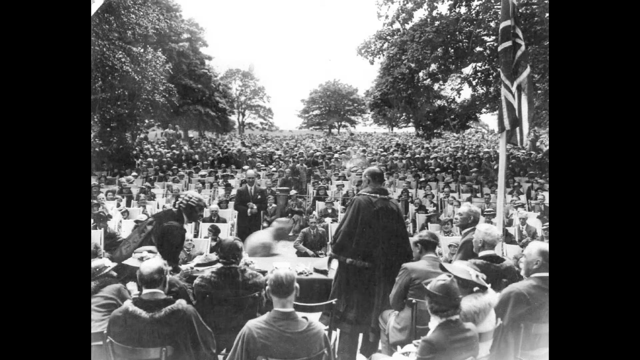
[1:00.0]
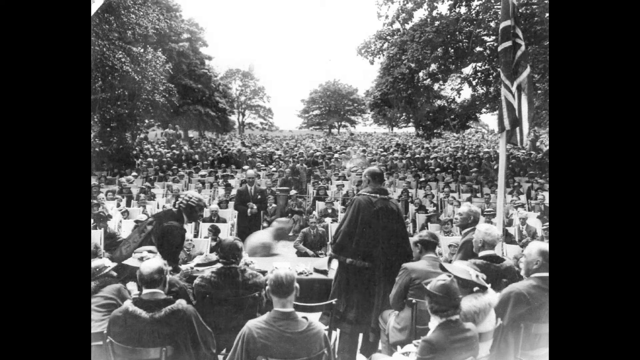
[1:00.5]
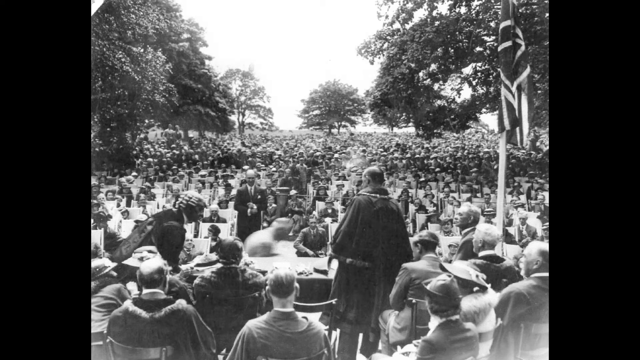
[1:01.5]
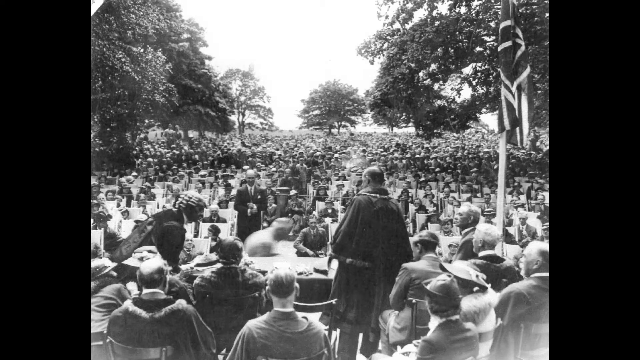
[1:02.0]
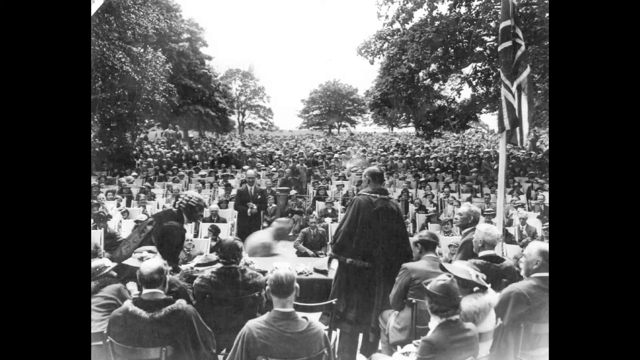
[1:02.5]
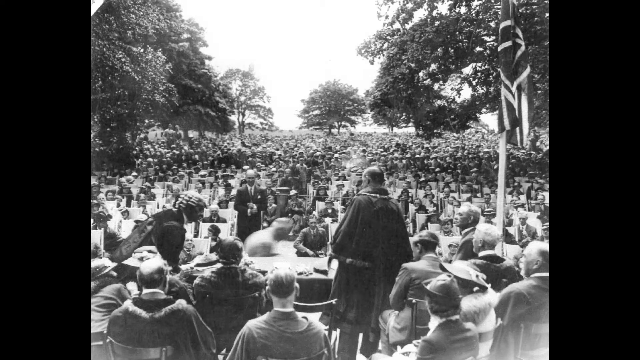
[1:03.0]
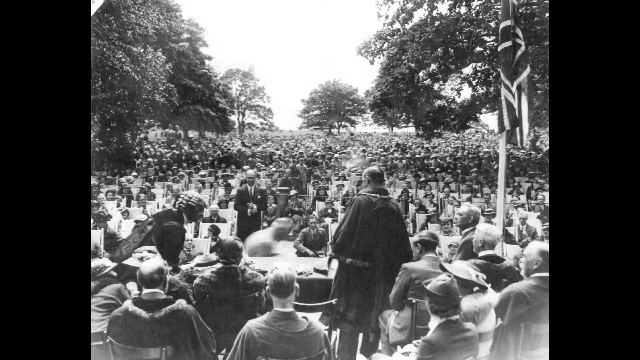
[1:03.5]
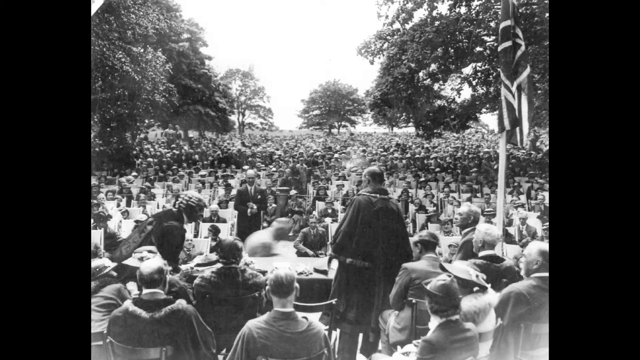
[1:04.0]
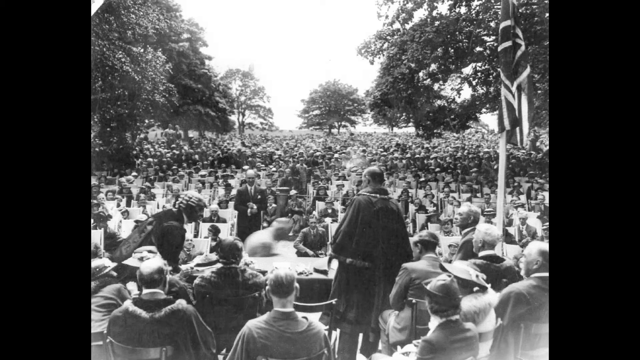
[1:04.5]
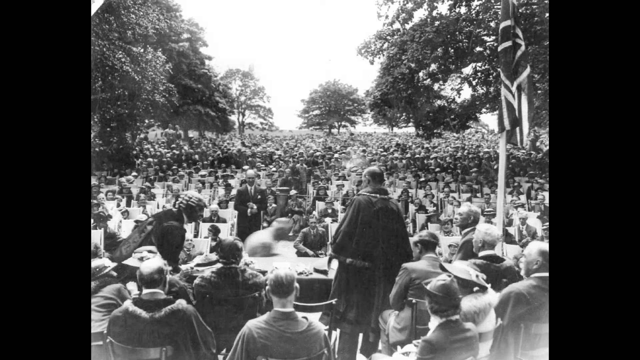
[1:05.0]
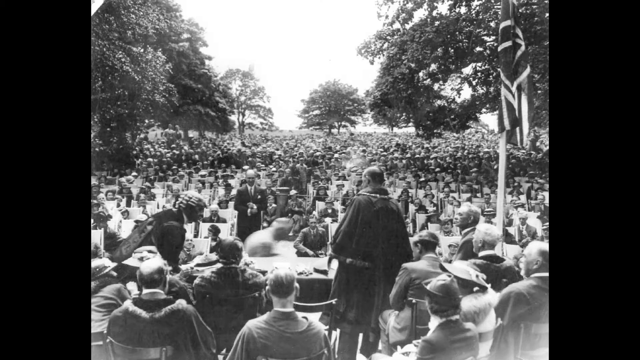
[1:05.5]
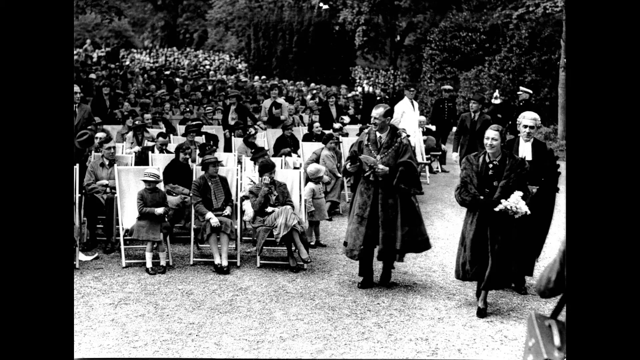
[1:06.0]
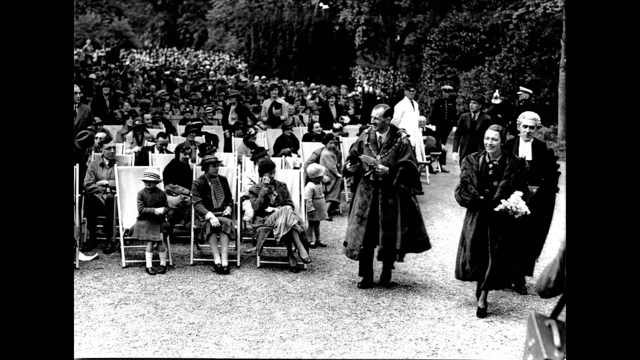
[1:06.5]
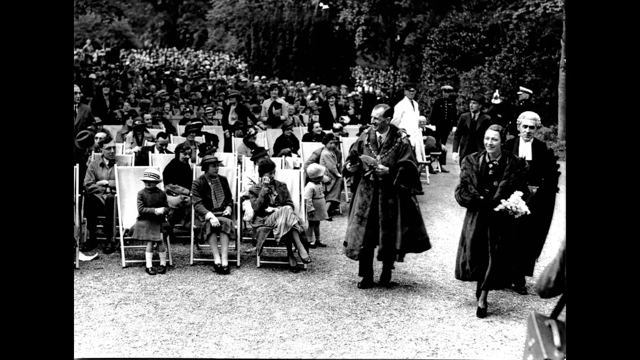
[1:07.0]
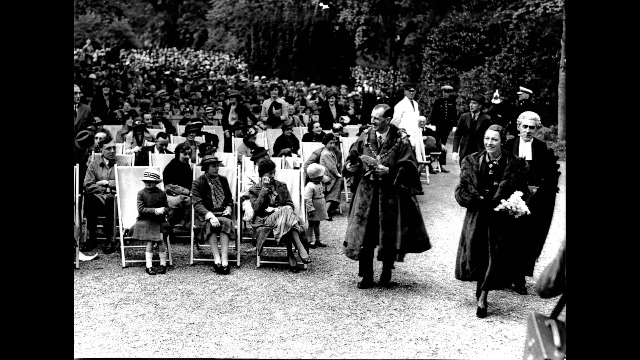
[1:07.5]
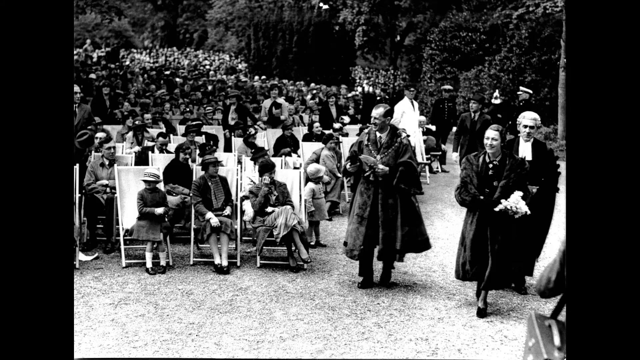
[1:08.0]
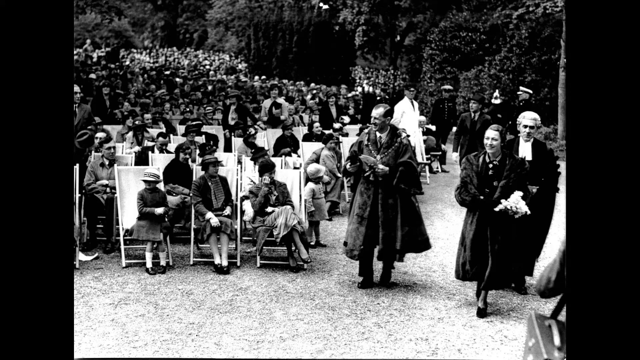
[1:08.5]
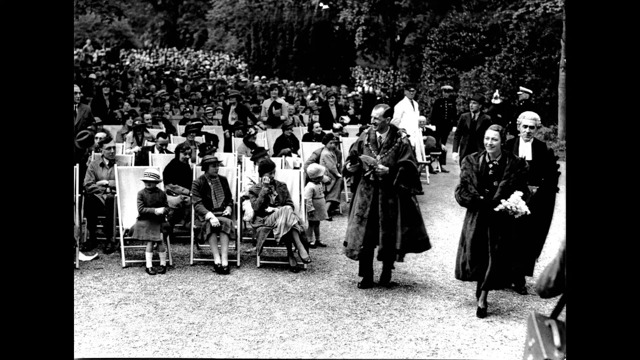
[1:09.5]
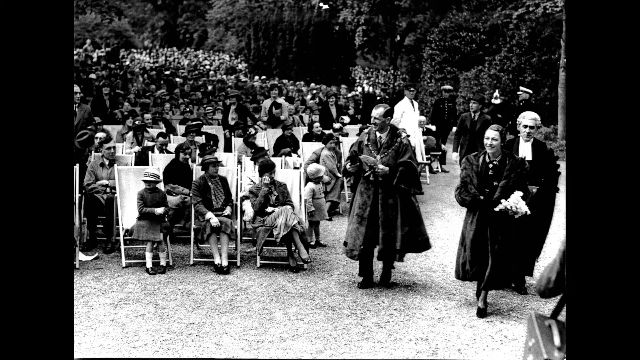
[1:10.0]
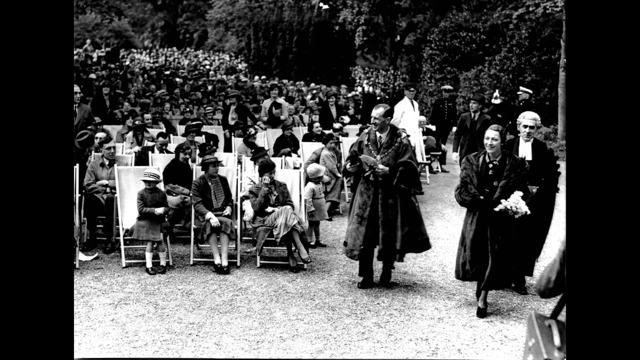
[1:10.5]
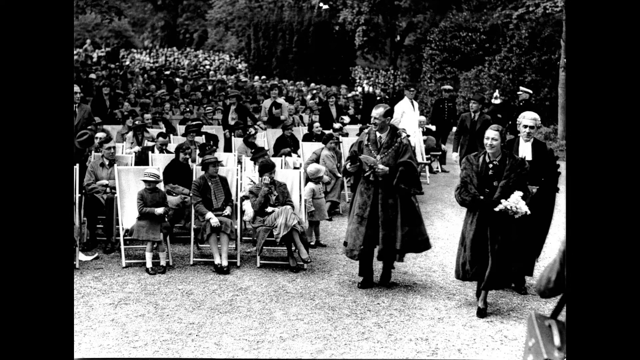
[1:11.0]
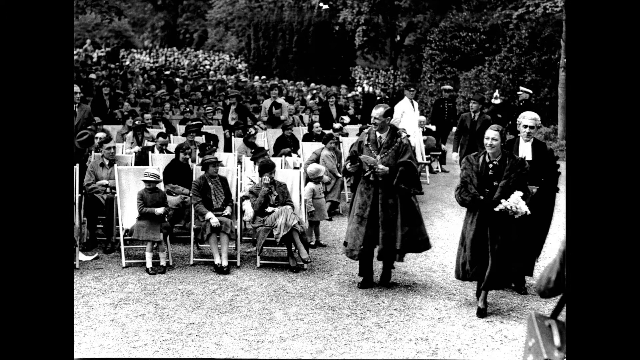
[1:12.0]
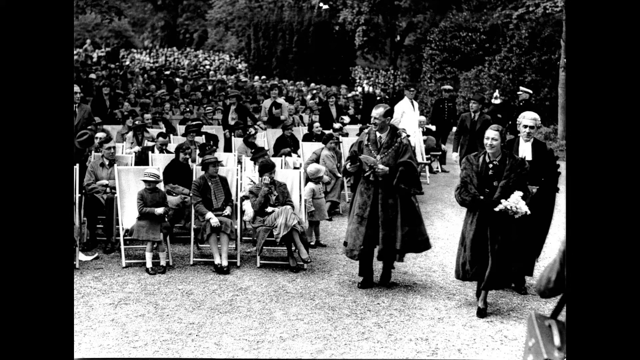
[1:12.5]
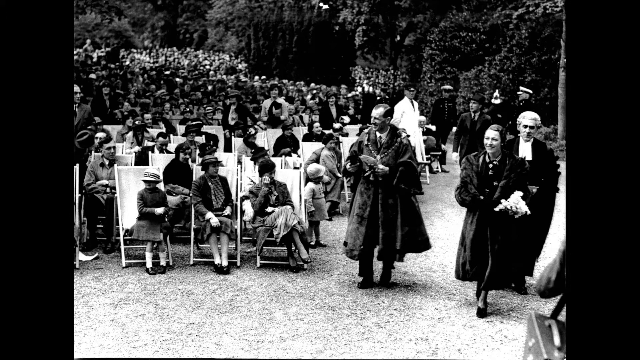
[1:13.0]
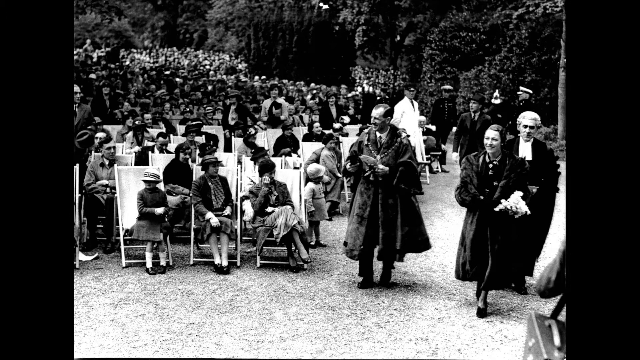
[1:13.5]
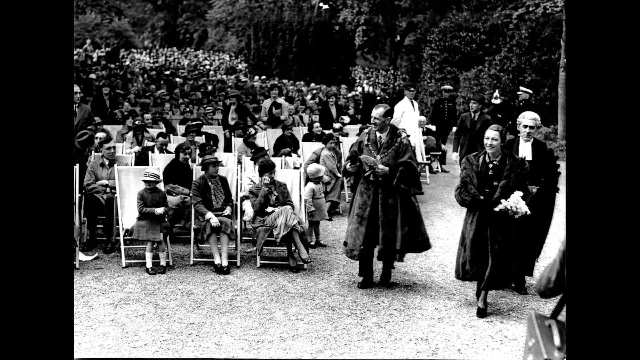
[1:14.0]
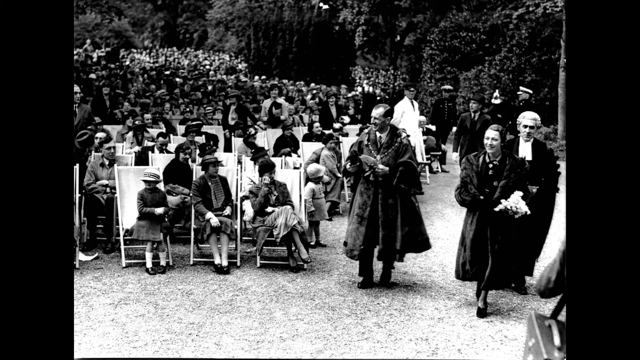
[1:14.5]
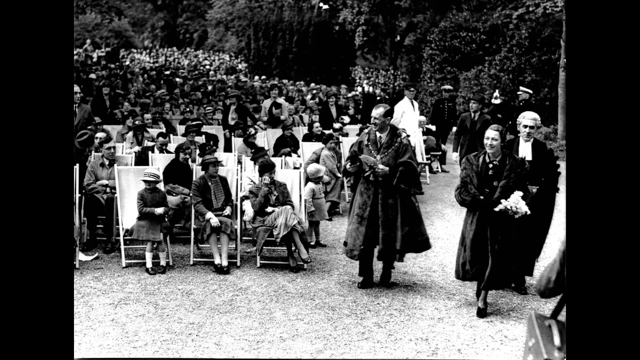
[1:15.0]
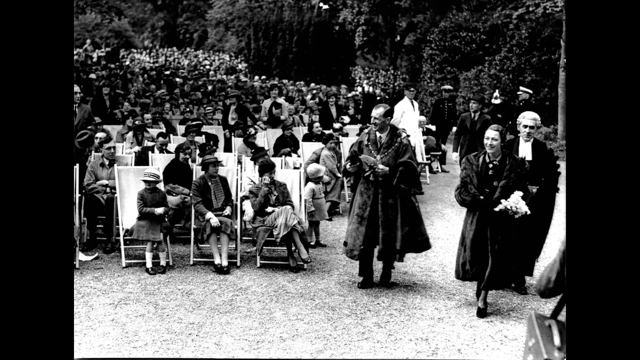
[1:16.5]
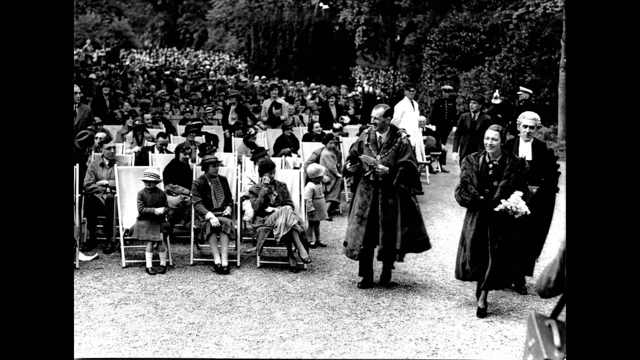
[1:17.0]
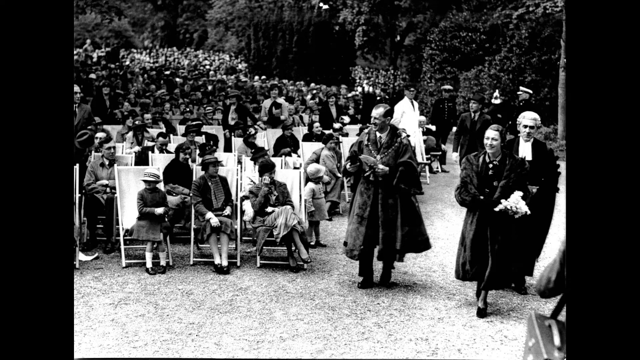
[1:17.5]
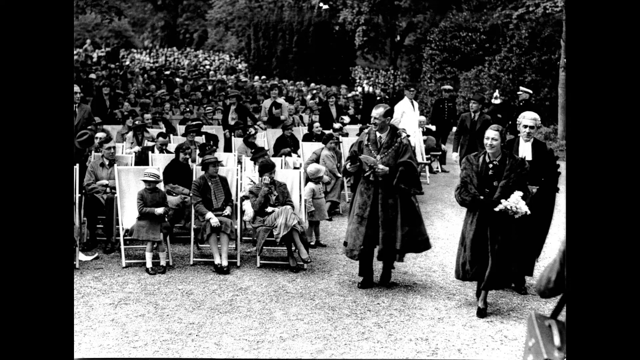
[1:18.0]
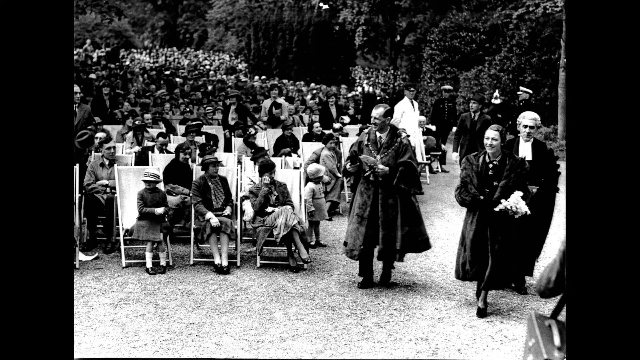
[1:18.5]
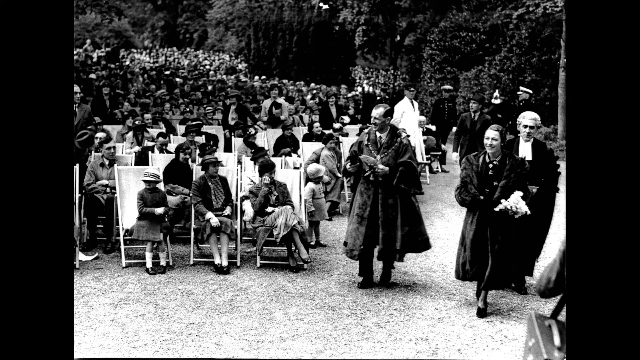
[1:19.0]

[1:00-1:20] The picture of the large group of people, with the poor priest-or-prisoner-looking man and the rich-looking man, stays on screen. Then comes a picture that seems to be from a different period, perhaps a reenactment. A man walking on the right has an old, British wig-like hairstyle and clothing that looks like a judge's, or perhaps he is a priest for a wedding, so the setting is perhaps a wedding. Many women appear, mostly sitting down and looking at the people walking by. Beside the priest-looking man is a woman in a long fur coat and a dark dress, and there is also a man wearing a big, long fur coat with a black suit underneath. Behind him is a traditional 1940s-to-1960s-style man with a round black hat, and behind him are two U.S. Marines, one following them and one facing to the left, standing at attention.